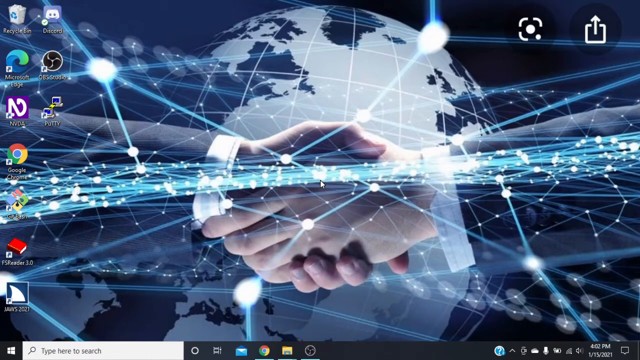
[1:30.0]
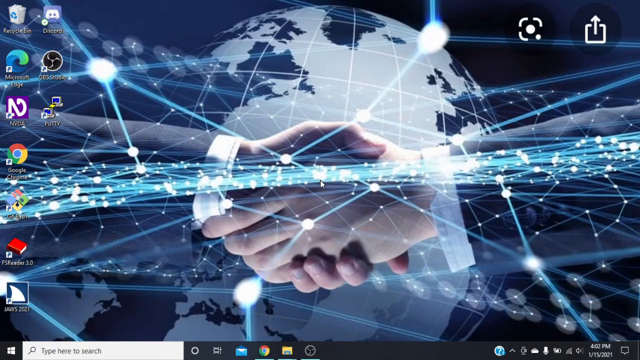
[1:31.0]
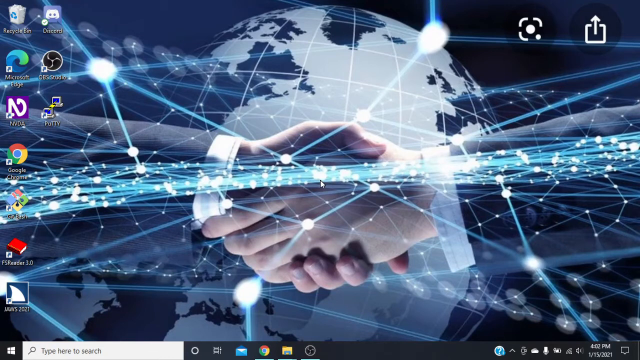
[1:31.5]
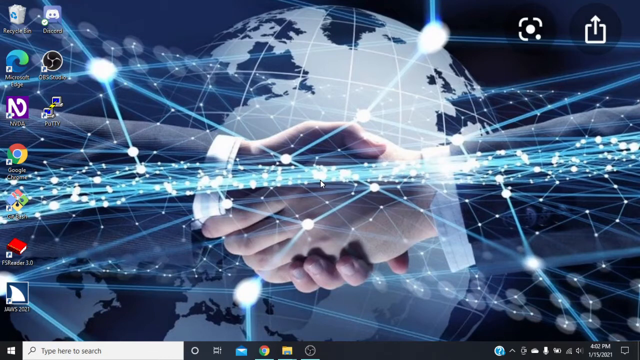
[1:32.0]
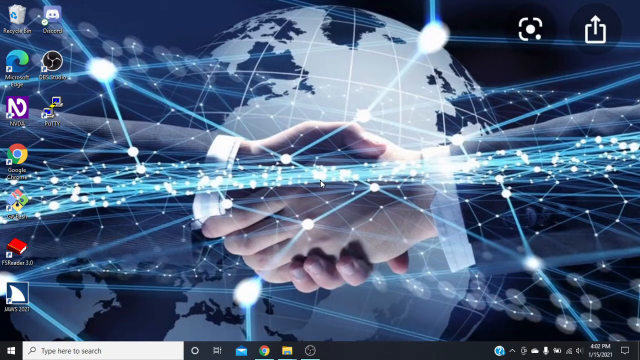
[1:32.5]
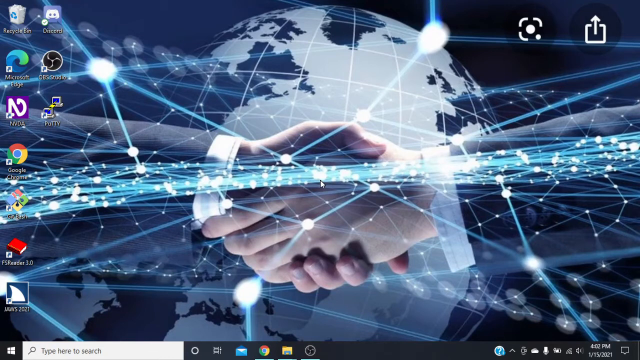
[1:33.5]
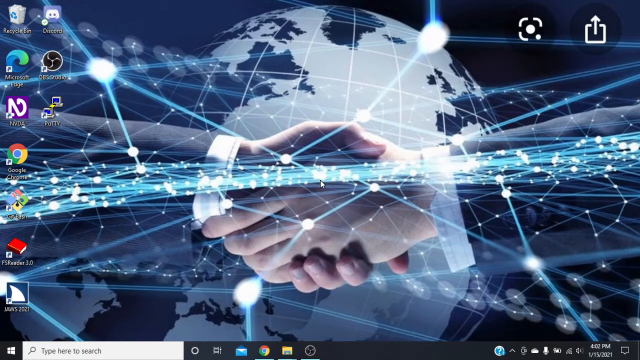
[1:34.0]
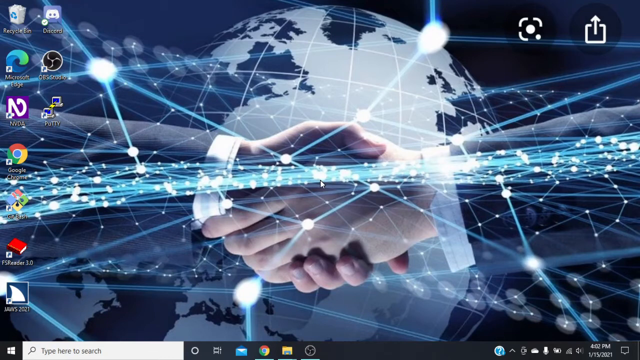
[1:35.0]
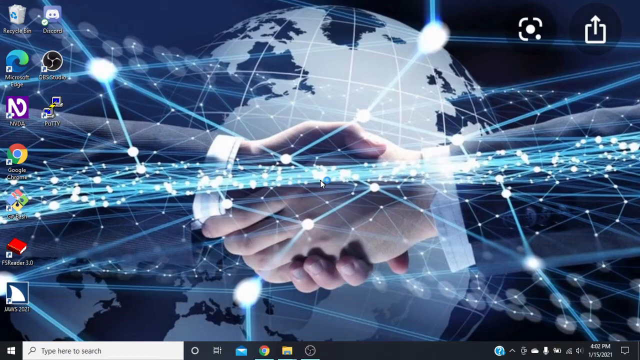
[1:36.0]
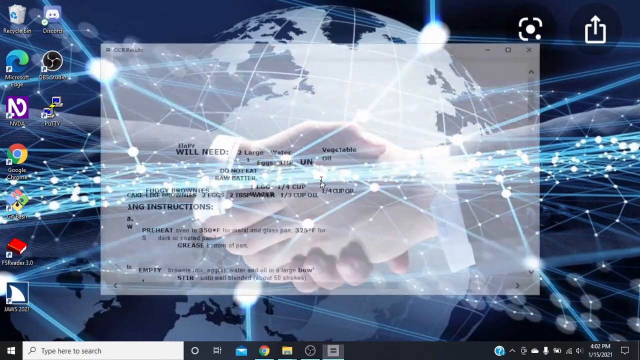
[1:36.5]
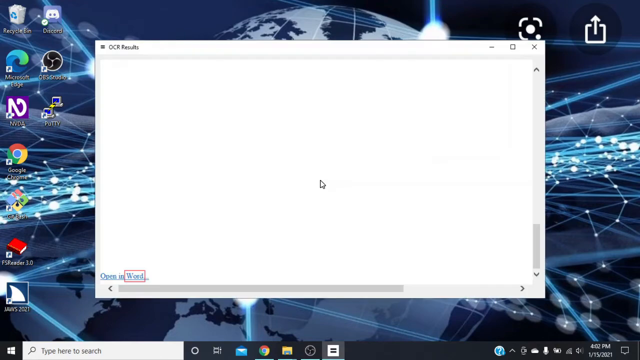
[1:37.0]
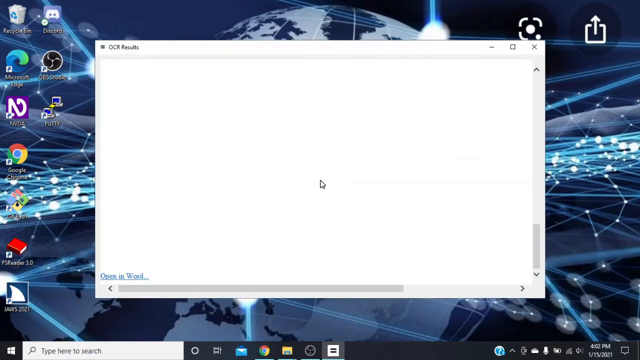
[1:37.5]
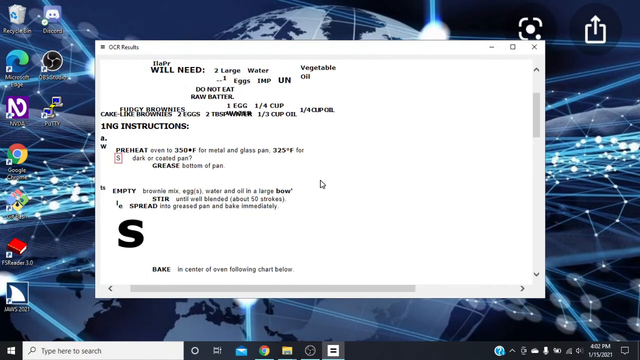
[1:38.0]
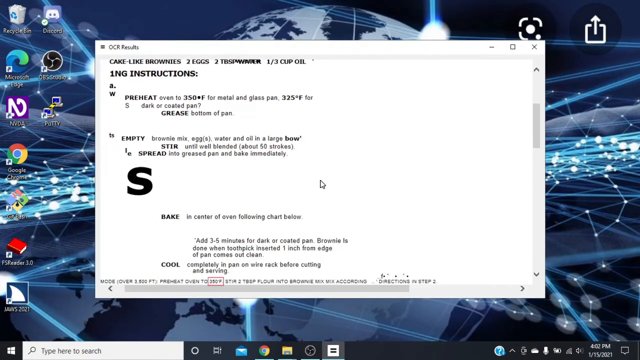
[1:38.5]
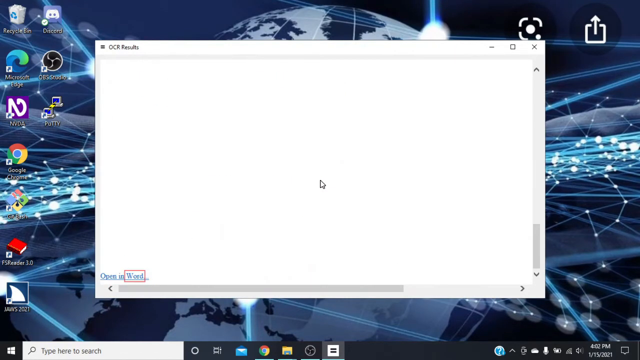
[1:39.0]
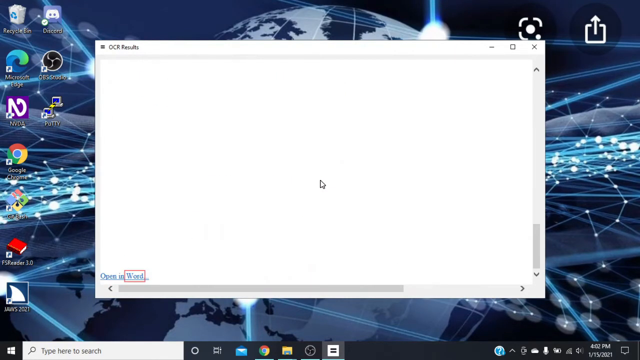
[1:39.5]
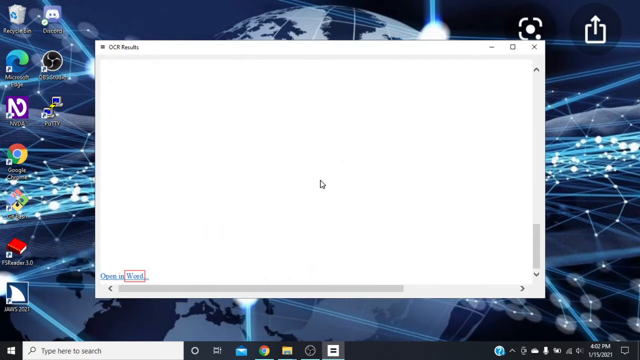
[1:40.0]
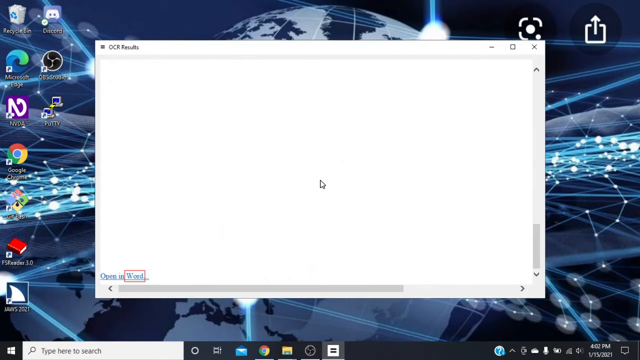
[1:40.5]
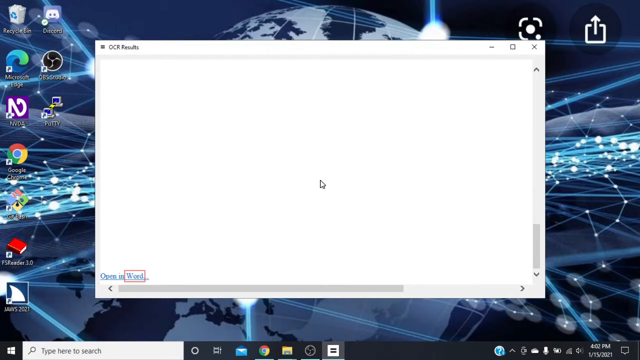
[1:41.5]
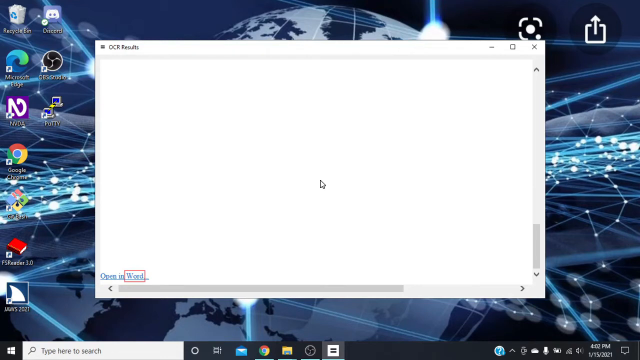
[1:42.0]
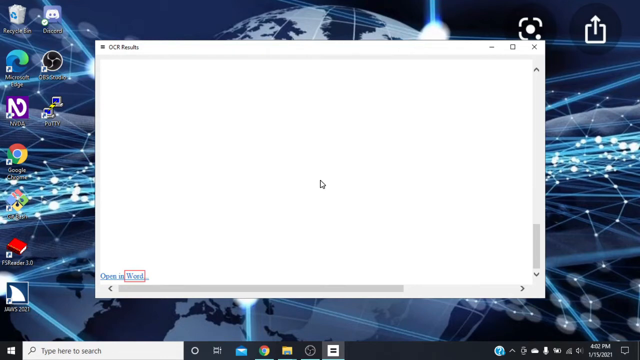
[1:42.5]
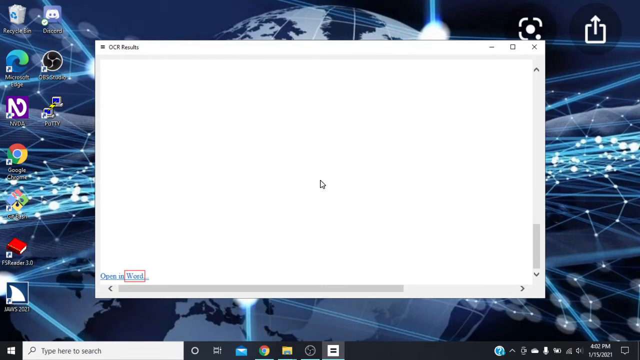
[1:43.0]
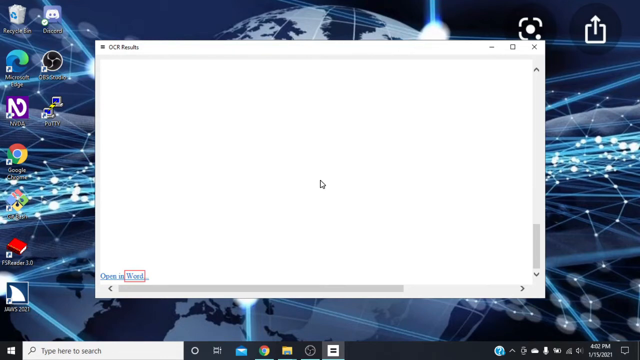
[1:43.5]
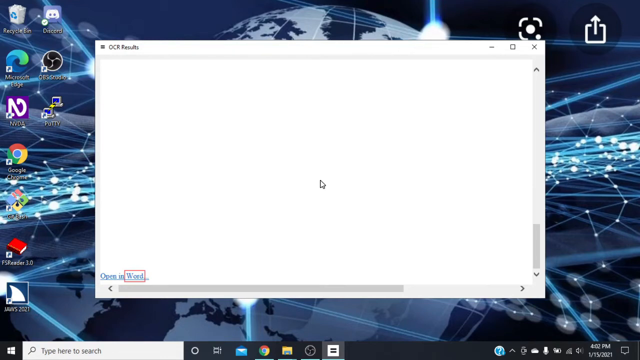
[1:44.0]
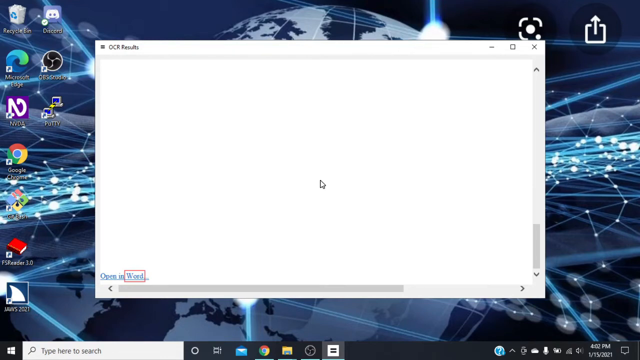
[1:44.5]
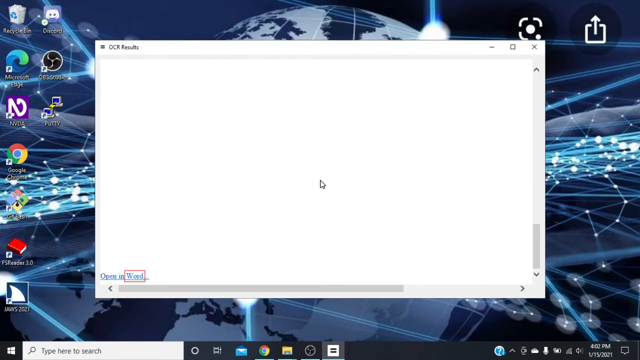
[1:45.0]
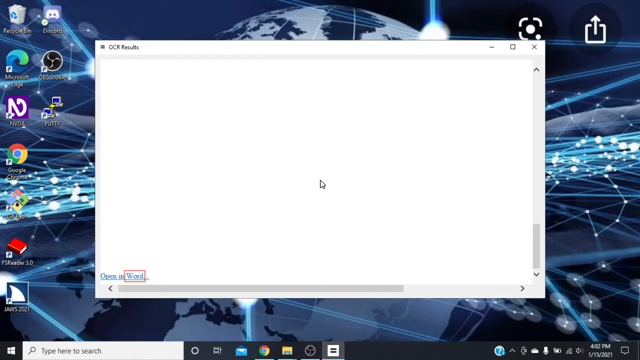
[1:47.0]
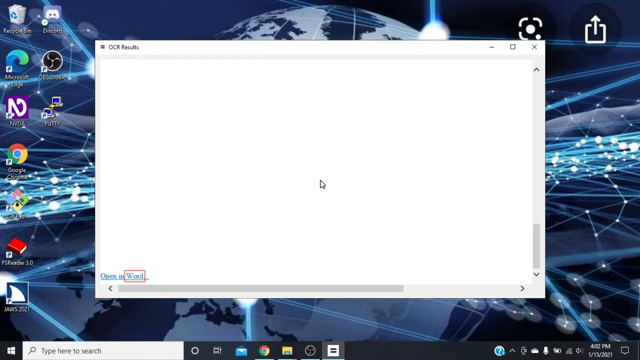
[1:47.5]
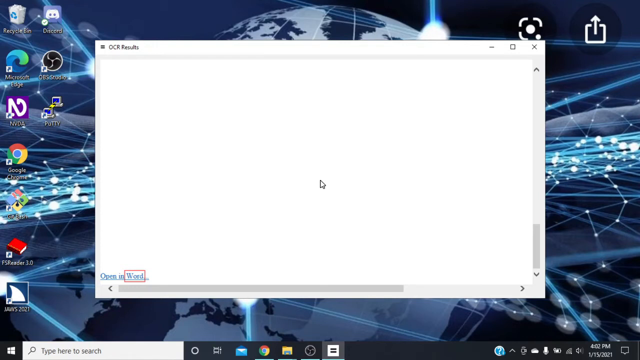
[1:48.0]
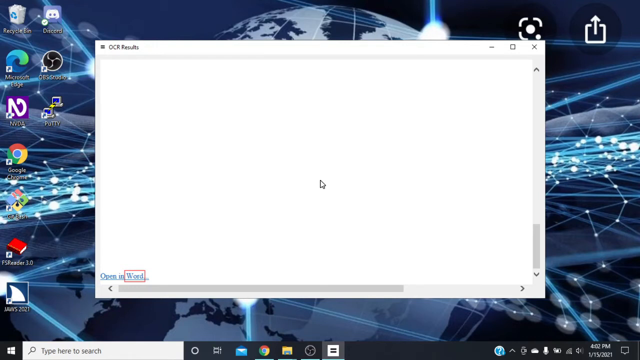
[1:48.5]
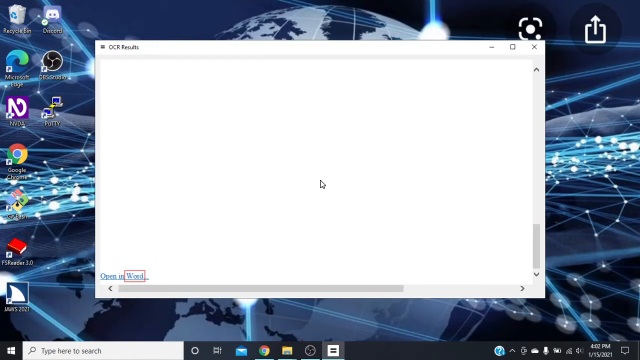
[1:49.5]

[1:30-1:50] The shark icon is no longer on the bottom bar, showing the program has been closed completely. Another application called "OCR Results" is open as a larger rectangular pop-up, with a hyperlink at the bottom to open the document in Word. Inside the OCR Results window is a recipe for cake-like brownies with instructions for making them. A scroll bar on the right side is scrolled all the way to the bottom to reveal the word "Word," which has a red rectangle around it. The user seems to have possibly pressed it and to be waiting for the document to open in Microsoft Word. The OCR Results window has close, maximize and minimize buttons.